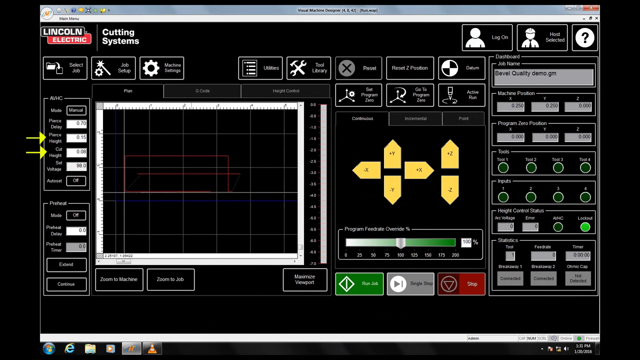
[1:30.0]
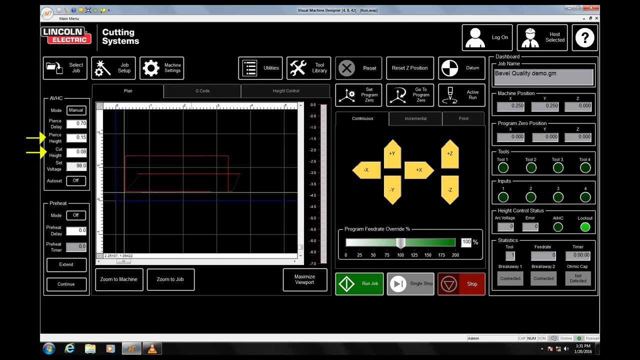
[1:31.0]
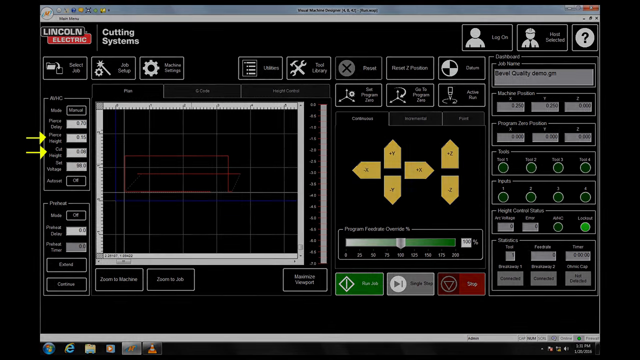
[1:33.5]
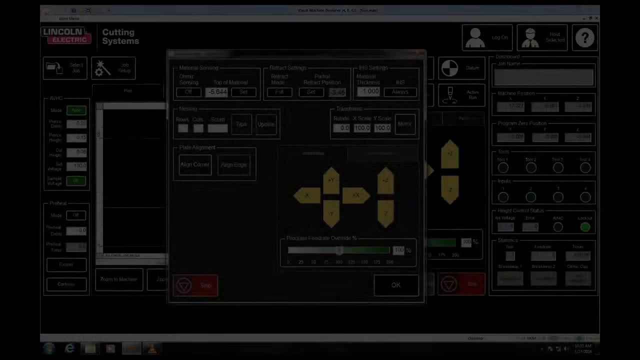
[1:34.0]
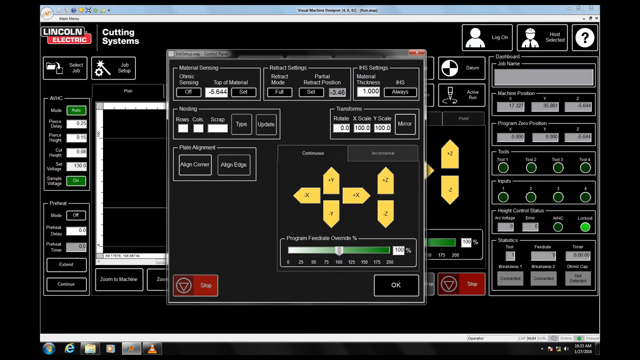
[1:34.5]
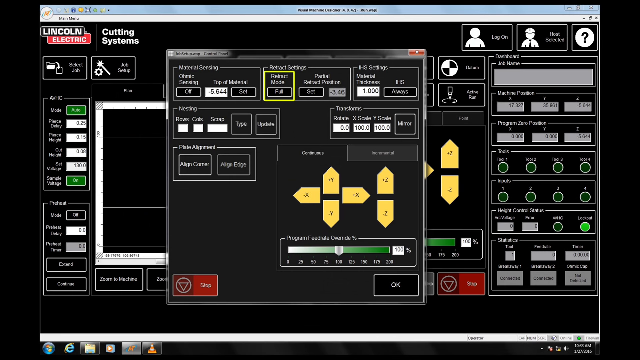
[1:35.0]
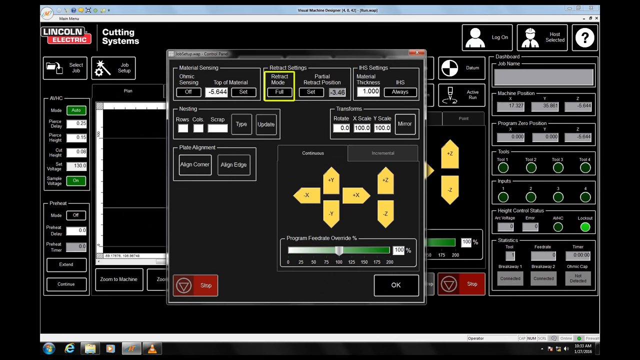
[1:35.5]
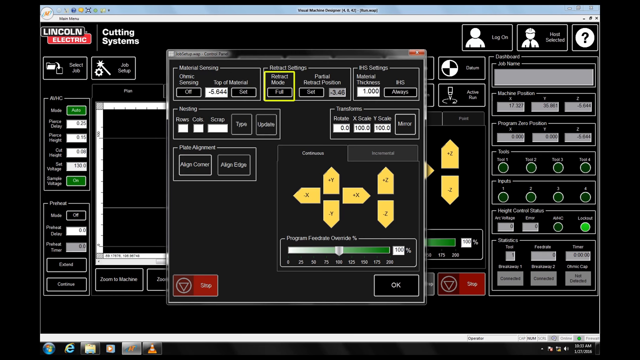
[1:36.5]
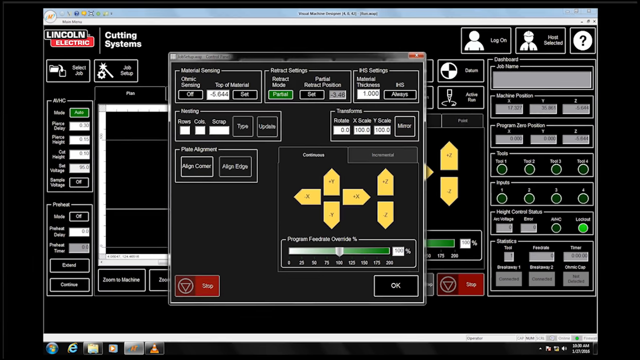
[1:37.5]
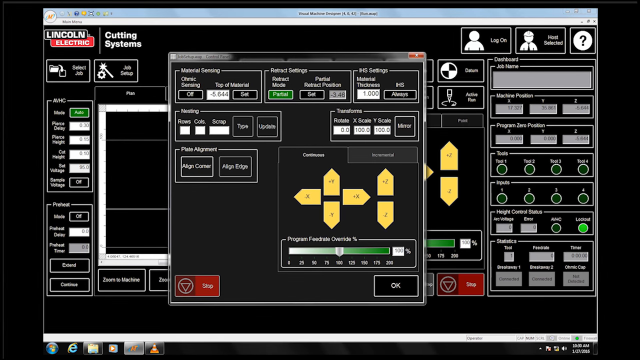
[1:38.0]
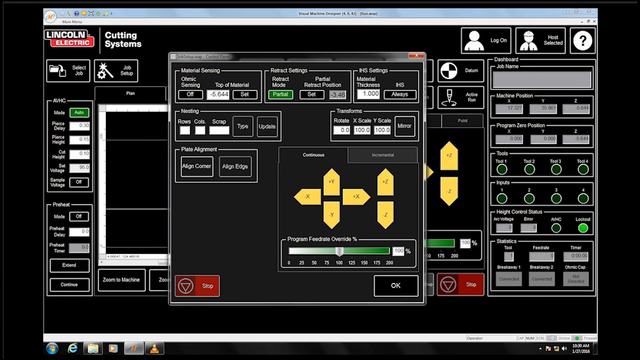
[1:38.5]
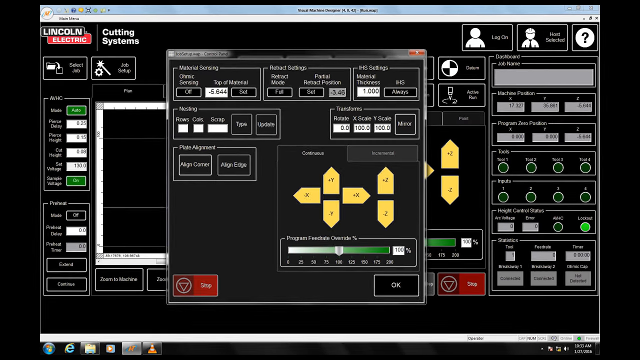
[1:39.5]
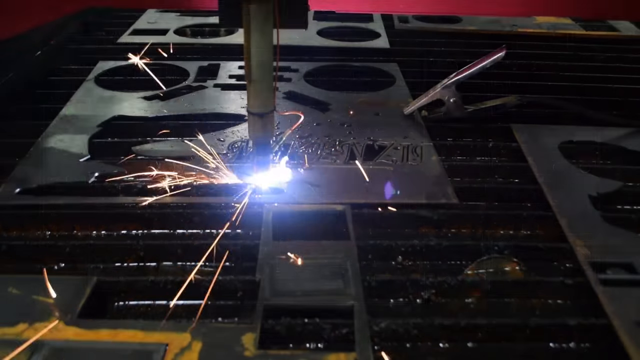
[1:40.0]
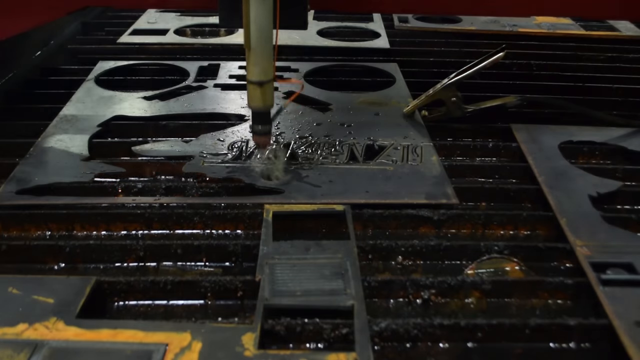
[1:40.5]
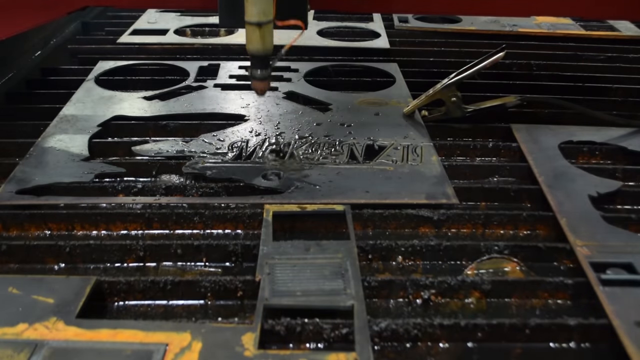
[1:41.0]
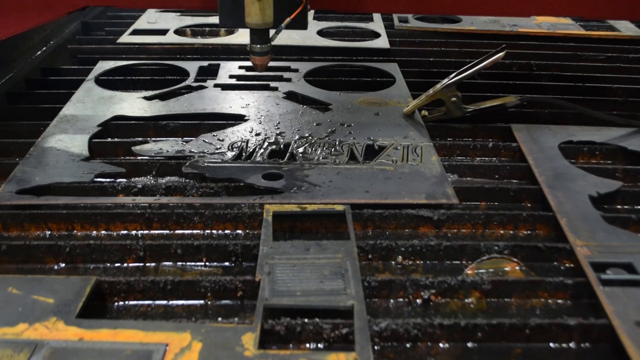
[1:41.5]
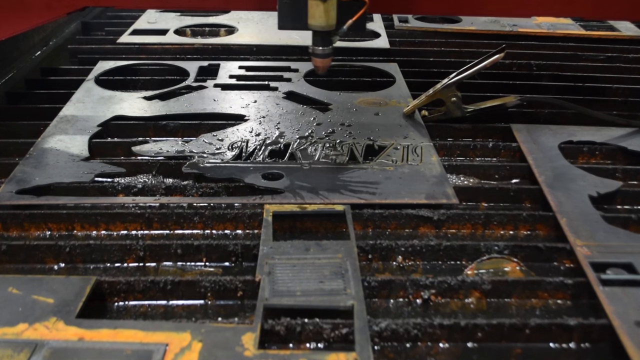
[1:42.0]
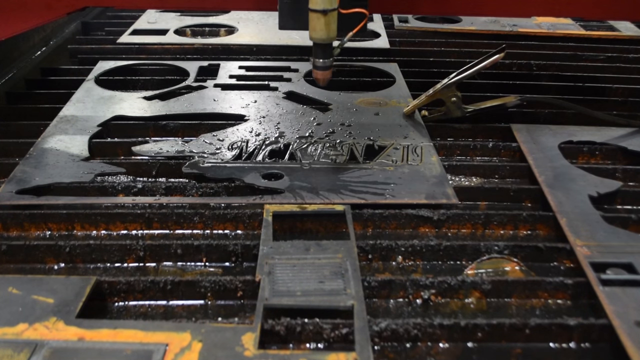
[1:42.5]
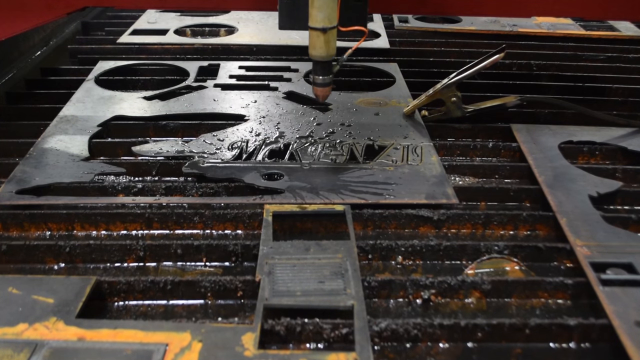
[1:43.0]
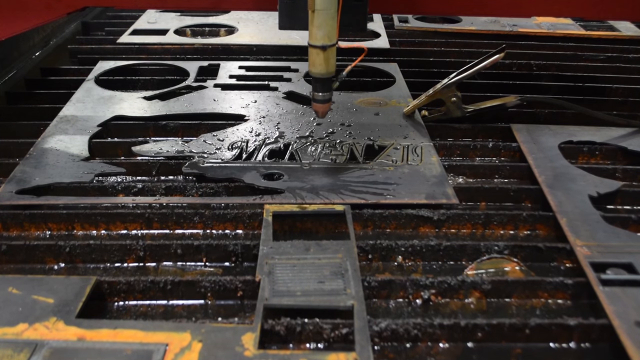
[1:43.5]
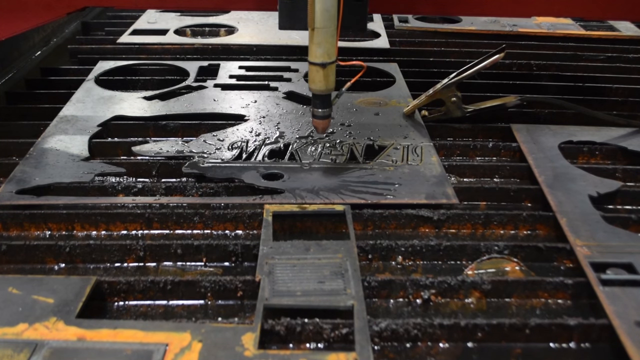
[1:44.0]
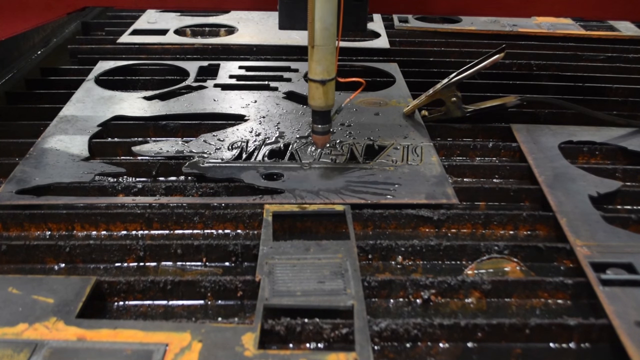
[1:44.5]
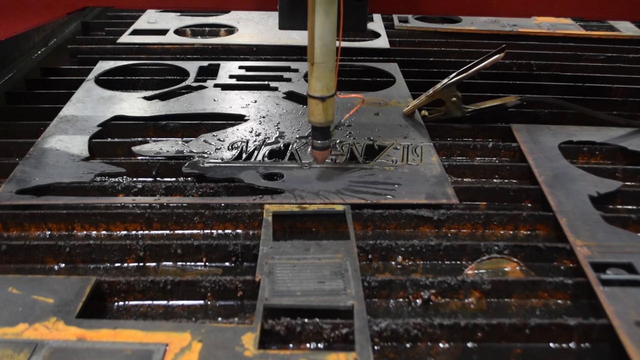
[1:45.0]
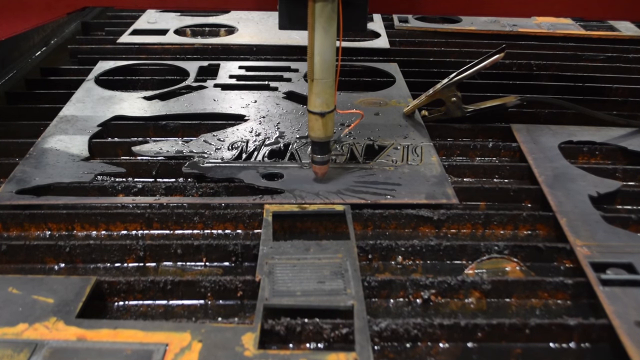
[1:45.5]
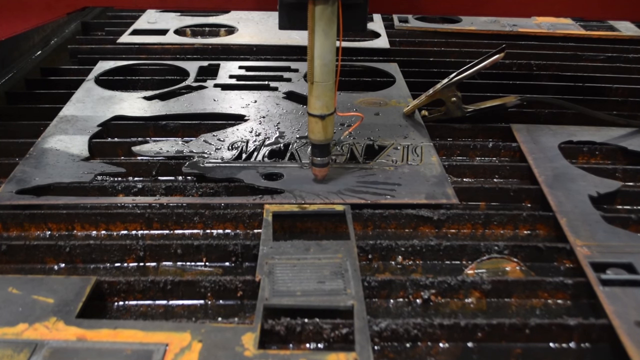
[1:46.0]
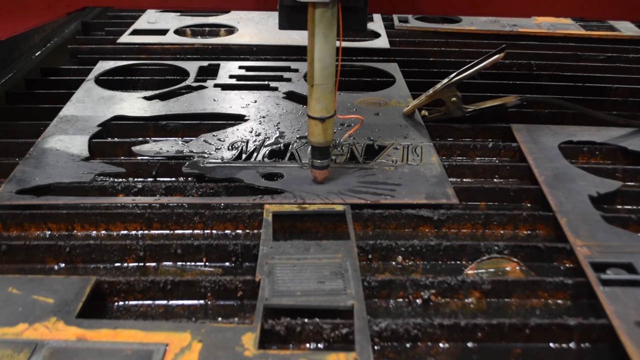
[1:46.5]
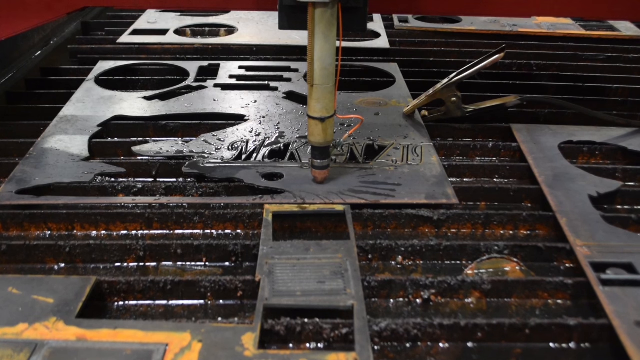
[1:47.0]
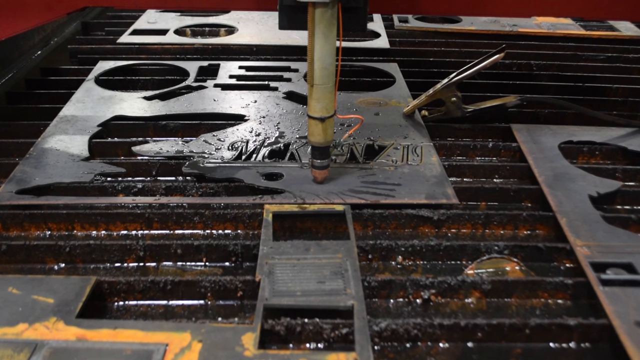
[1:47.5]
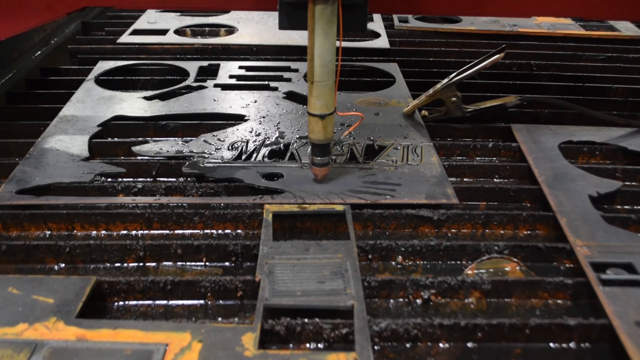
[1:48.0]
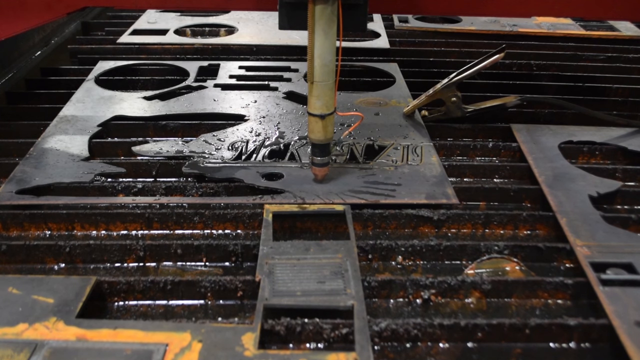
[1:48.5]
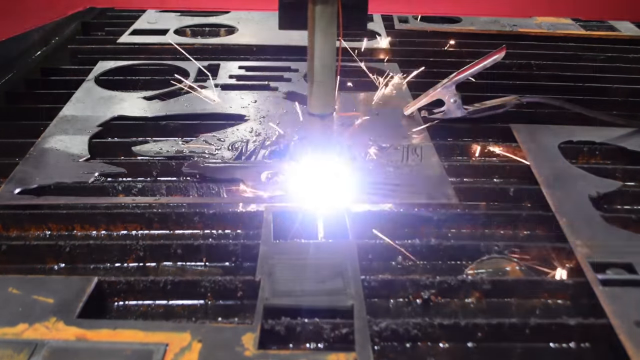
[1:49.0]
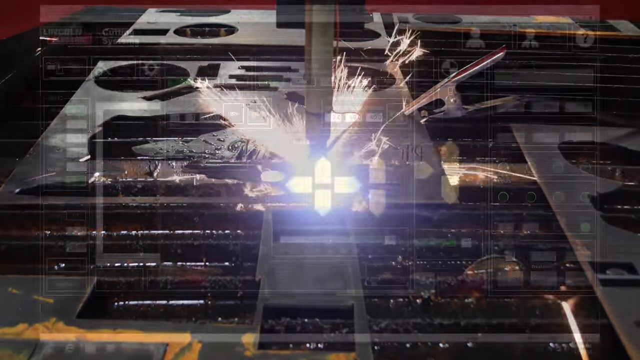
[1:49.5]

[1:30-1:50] "Lincoln Electric" is shown, and "retract mode" is clicked and shows yellow, followed by "partial". The iron coming from above drills a hole beneath the written "McKenzie", then moves to the other side of the flat iron, and light is displayed on the flat iron on the ground. As the iron touches the flat iron, there is water movement. Four yellow arrows point in different directions, with another two pointing upward and downward. Another section shows two icons that look like human images at the top and a question mark, along with "cutting systems". There are four green circles at the top and four at the bottom, then two other green circles. At the bottom of the yellowish arrow are green, gray and red. The total time is 2.59, and "Lincoln Electric cutting systems" is shown.